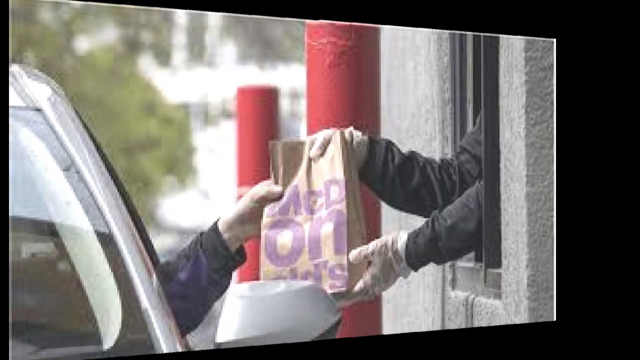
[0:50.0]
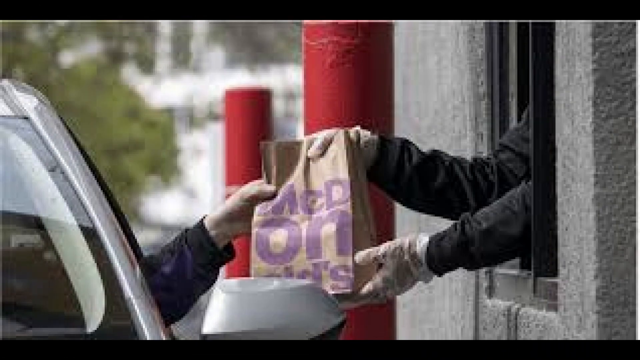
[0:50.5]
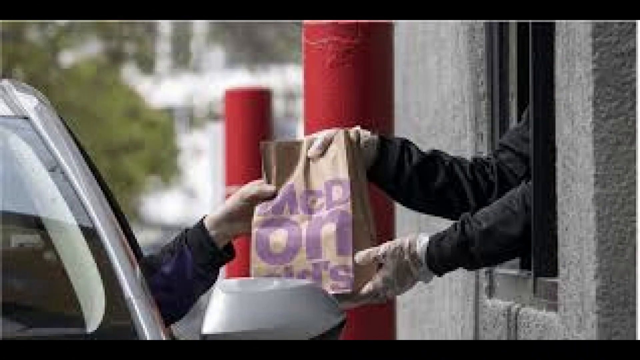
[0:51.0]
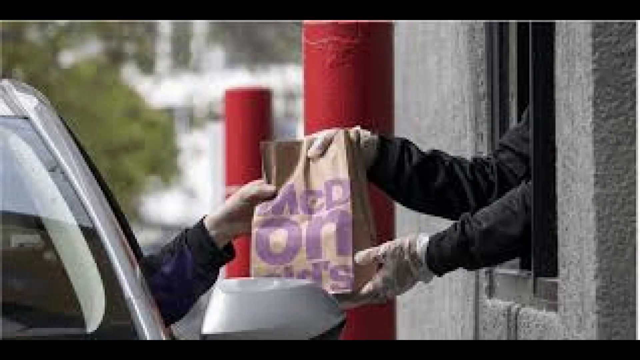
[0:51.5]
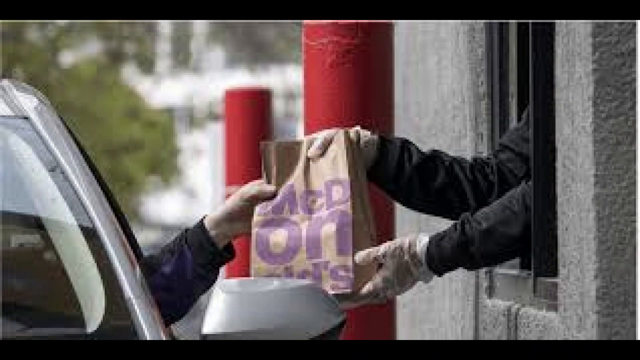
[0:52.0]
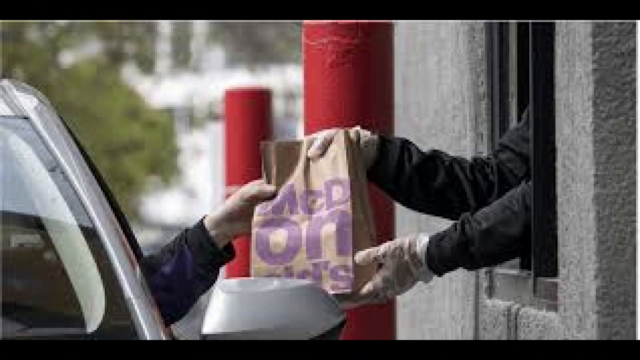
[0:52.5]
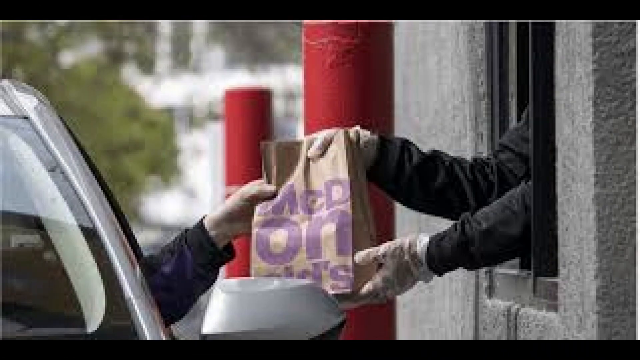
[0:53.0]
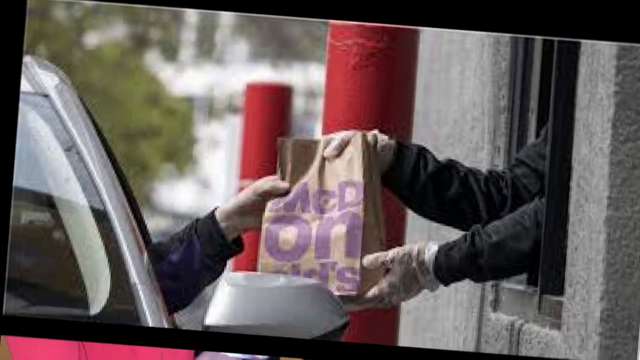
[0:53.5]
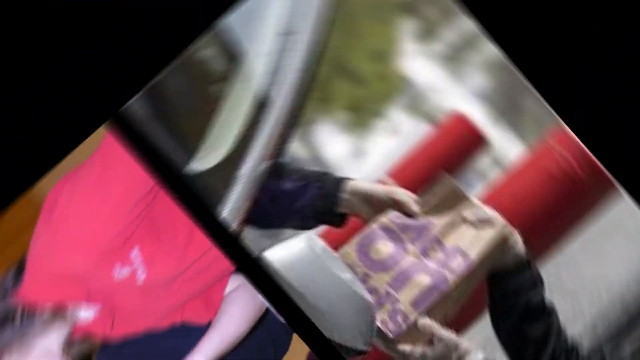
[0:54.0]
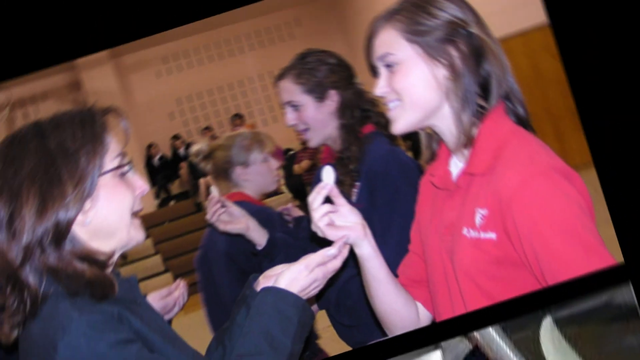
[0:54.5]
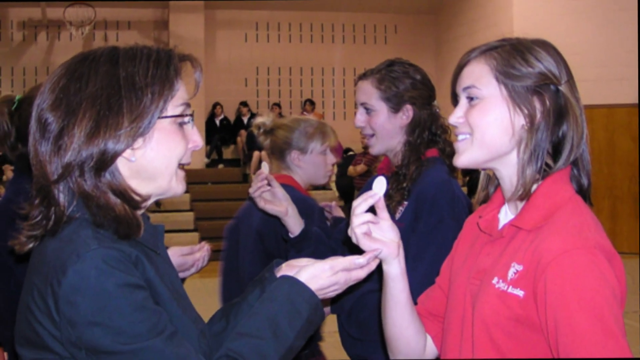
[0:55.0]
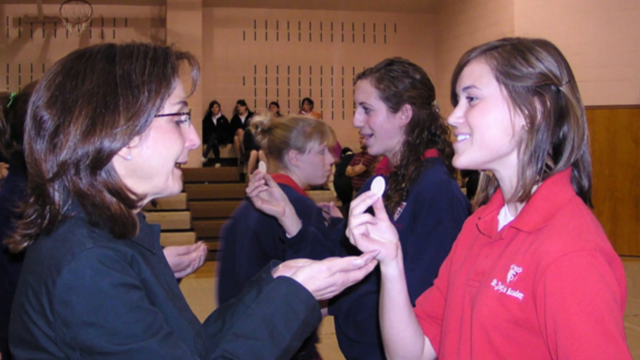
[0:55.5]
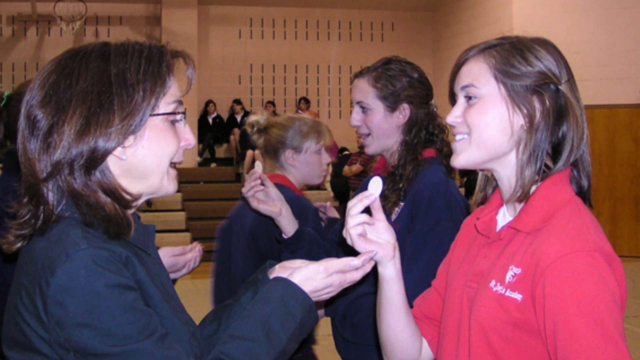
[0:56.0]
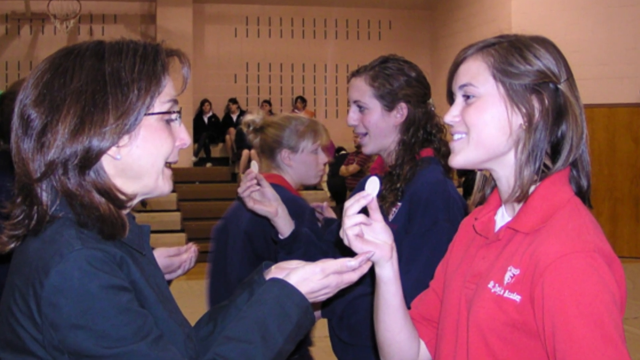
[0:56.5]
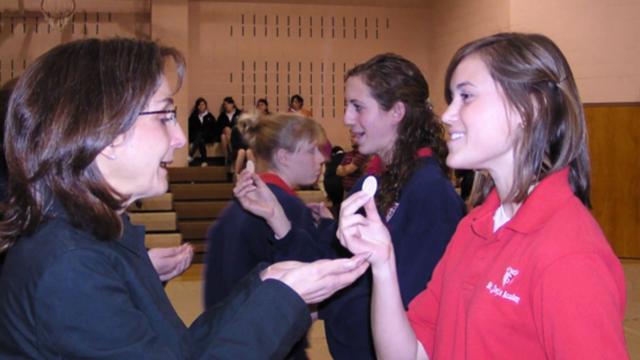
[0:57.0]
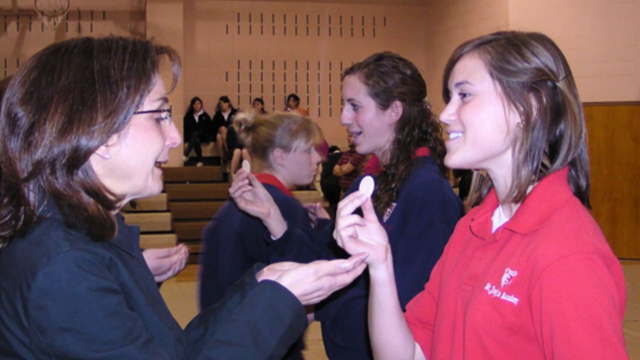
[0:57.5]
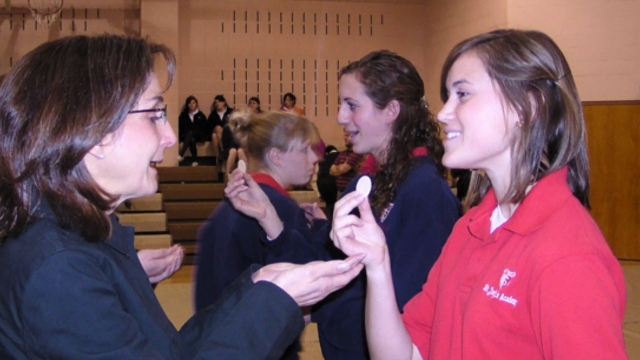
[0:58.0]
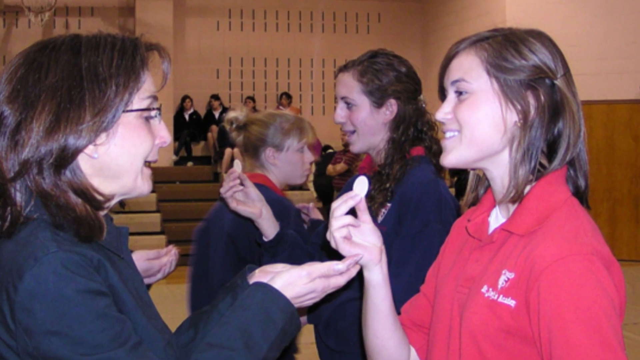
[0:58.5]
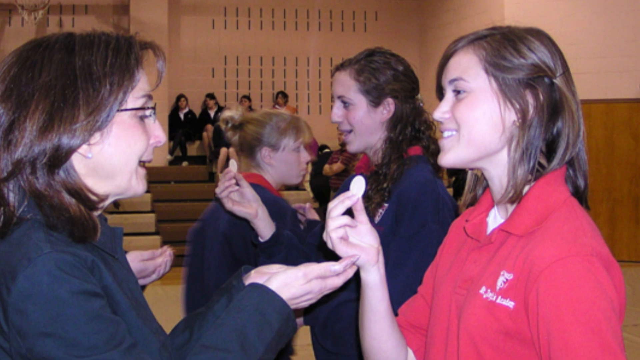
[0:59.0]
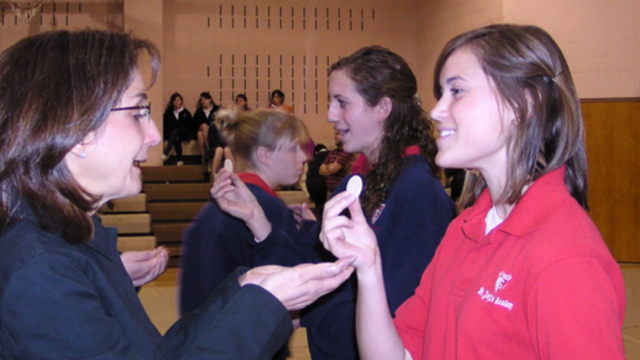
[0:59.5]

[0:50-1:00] A car comes through a drive-thru. Two gloved hands, apparently belonging to a restaurant worker, hand food to the person in the car; only the worker's hands are visible. A hand then comes from the car of the man picking up his food. The bag kind of looks like it is from McDonald's. The video then appears to go back to the ladies handing mints to each other. A lady in a red short-sleeved shirt with a red collar hands the mint to another lady who wears glasses and a black jacket and has shoulder-length brunette hair. Next to them are two other ladies; one, with brunette hair pulled back and coming down past her shoulders, holds the mint and is about to hand it to the other, who has both hands cupped to receive it. Girls in the background, sort of on a bench, watch; they all wear uniforms, and all their shirts appear to have a crest, apparently of the school or church.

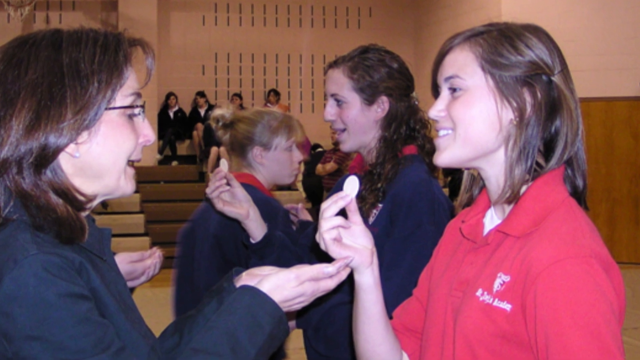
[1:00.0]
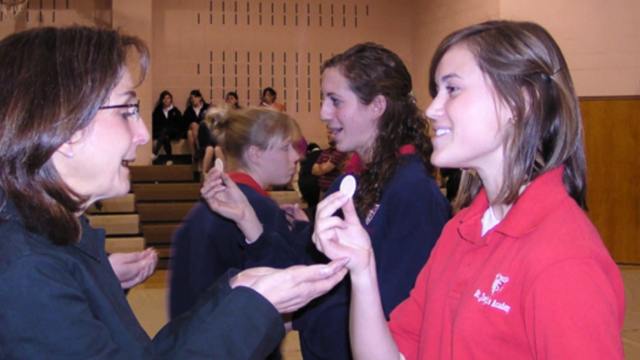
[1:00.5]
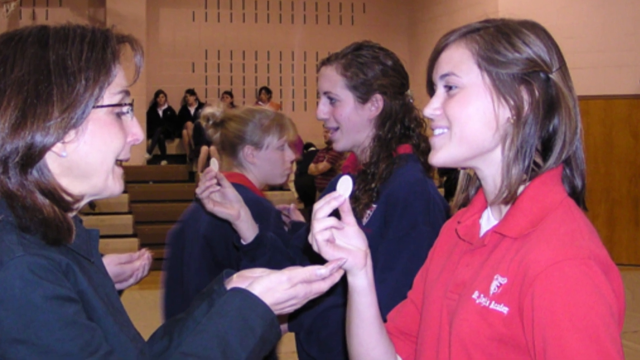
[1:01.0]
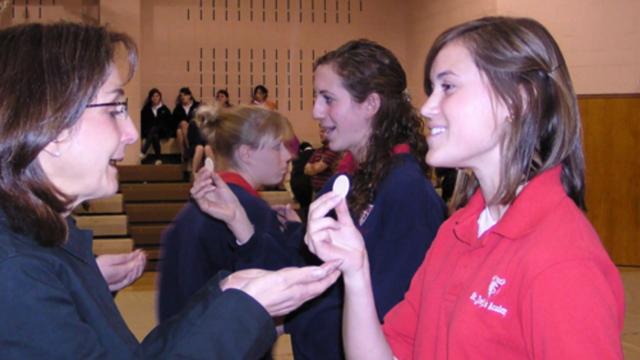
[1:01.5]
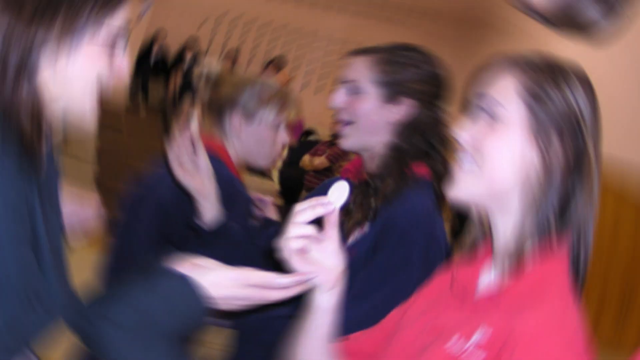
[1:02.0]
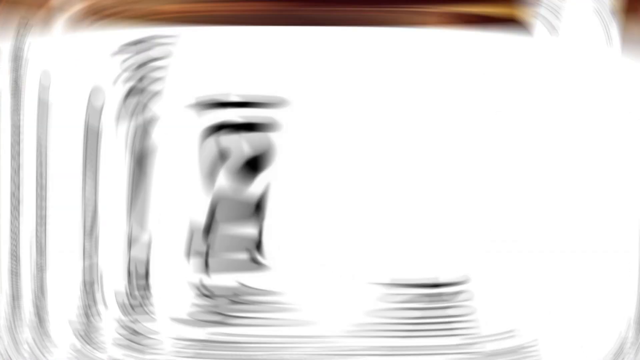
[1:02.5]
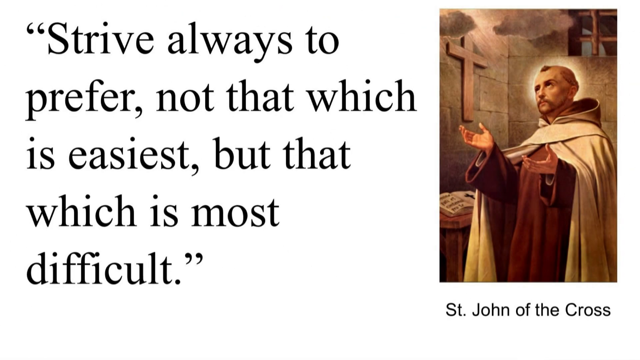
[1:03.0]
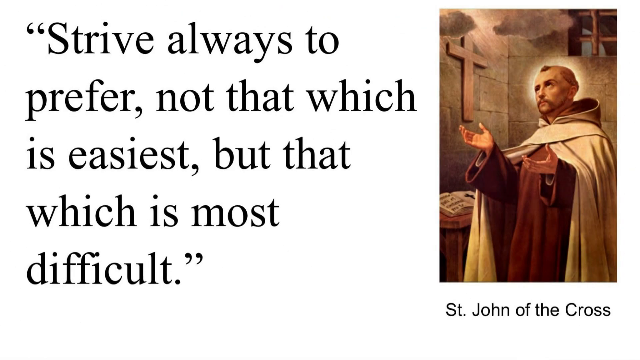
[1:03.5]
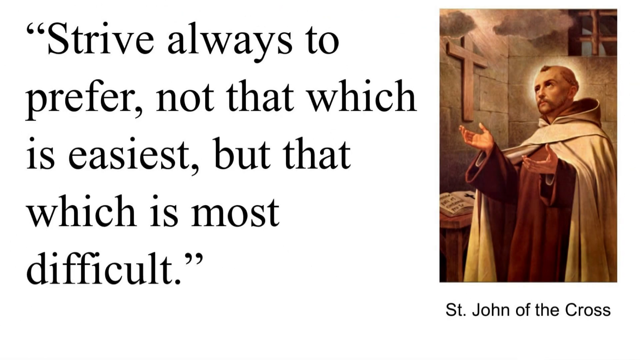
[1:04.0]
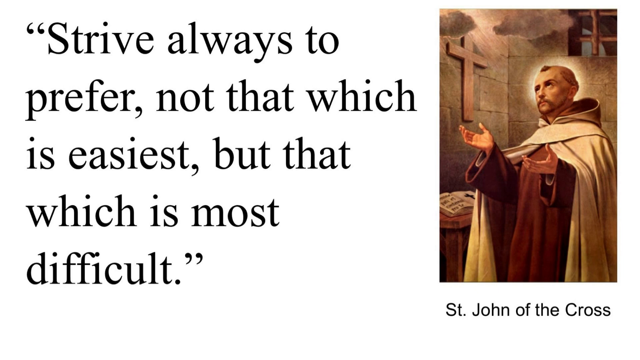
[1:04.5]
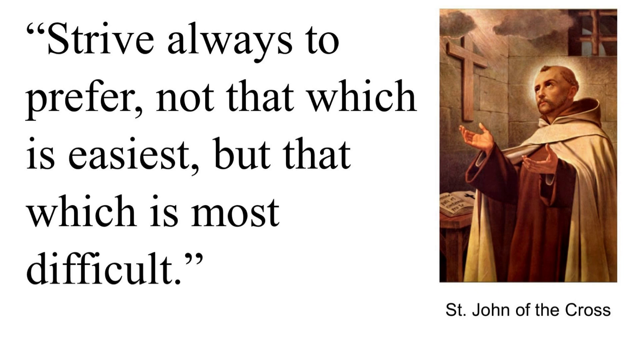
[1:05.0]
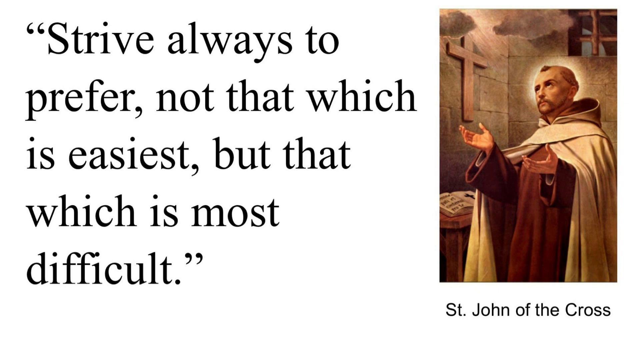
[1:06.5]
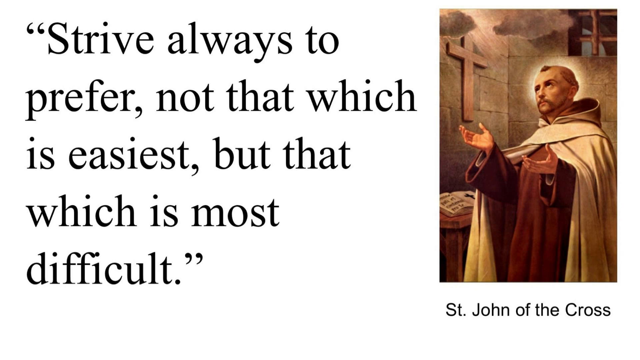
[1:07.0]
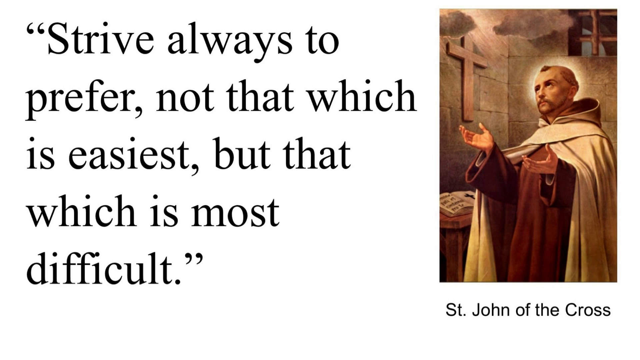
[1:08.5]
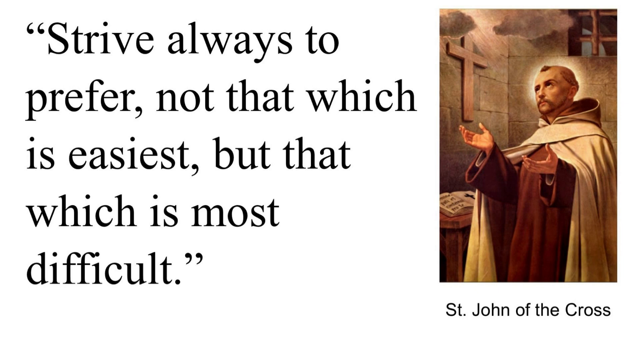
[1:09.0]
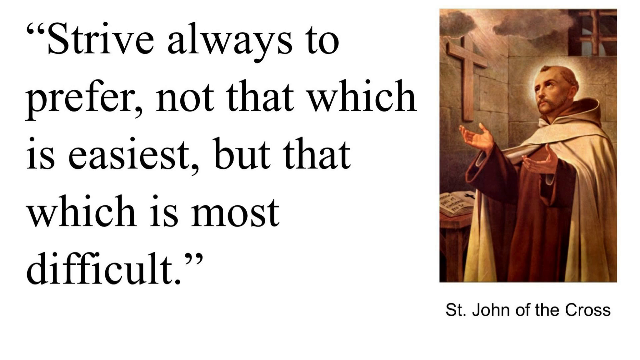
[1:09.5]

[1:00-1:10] A group of young ladies hand what looks to be a white mitt to each other. One young lady in a red shirt with a red collar hands it to another lady who appears to wear a black jacket; she has glasses, is smiling, and has her hands cupped to receive it. Two girls next to them do the same thing; one has her hair pulled back and wears a blue jacket with a red shirt underneath. Behind them are benches with other ladies watching, and all the ladies wear uniforms. The video then shows what looks like a monk-like figure with his hands out and a cross on the wall. He wears a brown robe with something like a yellow hoodie over it and looks up at the sky as the sun sort of shines on his face; it kind of looks like a depiction of Jesus but without any real hair.